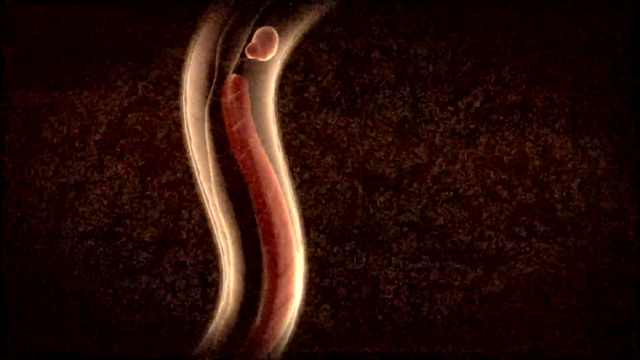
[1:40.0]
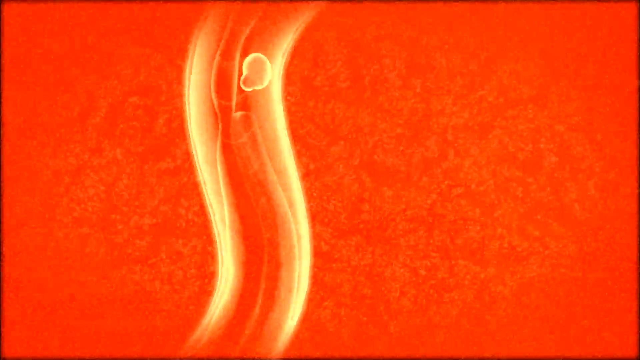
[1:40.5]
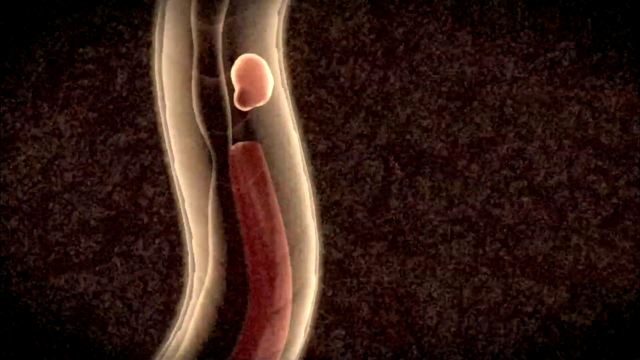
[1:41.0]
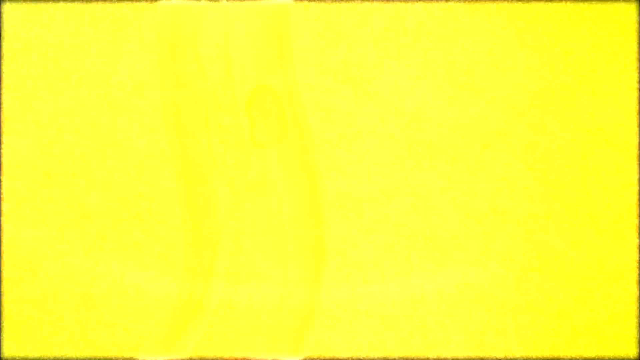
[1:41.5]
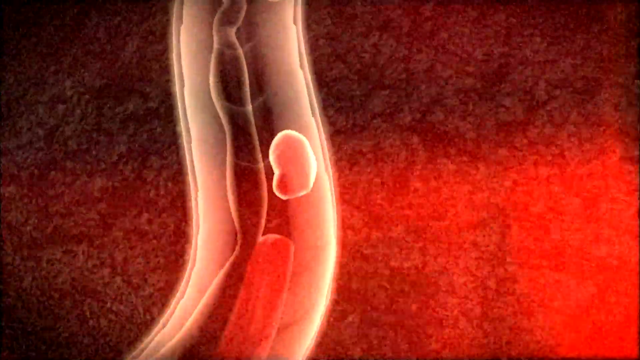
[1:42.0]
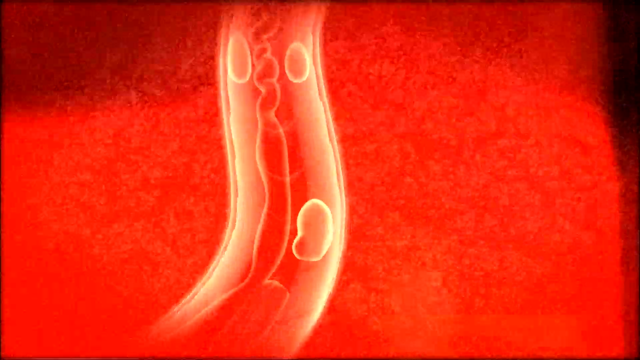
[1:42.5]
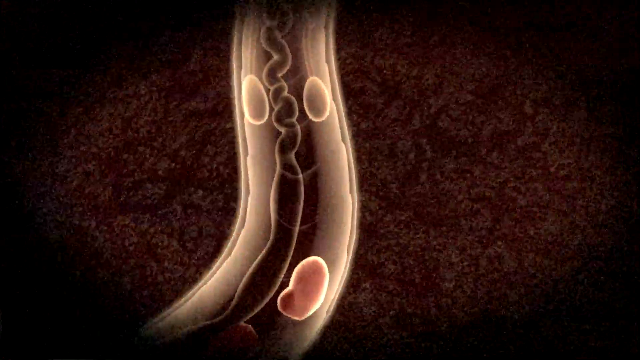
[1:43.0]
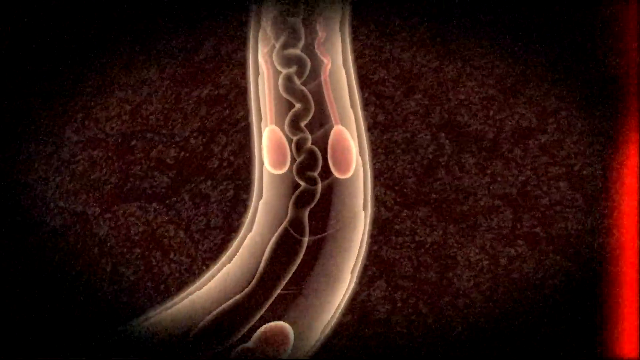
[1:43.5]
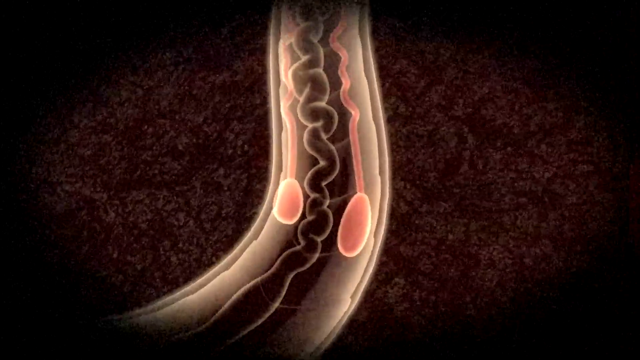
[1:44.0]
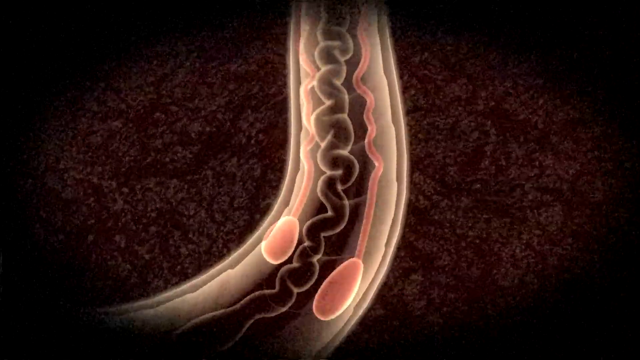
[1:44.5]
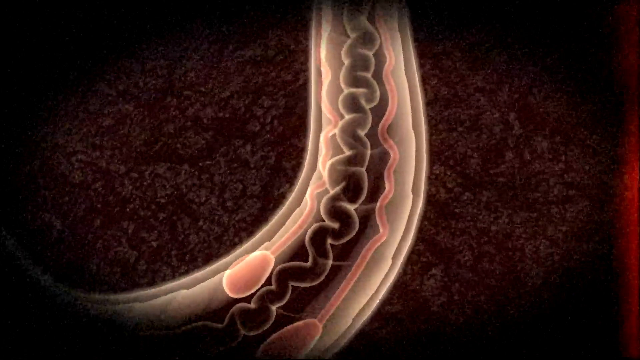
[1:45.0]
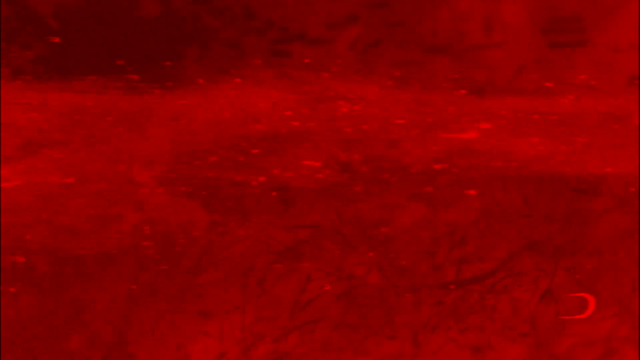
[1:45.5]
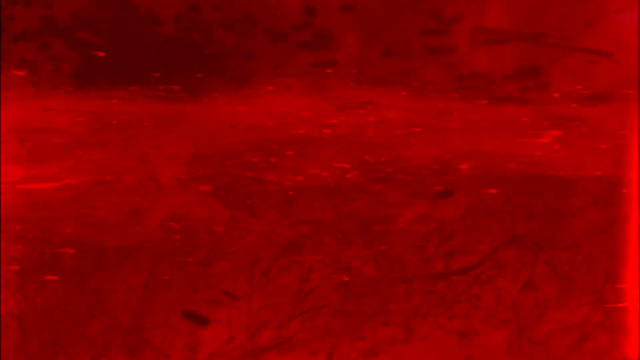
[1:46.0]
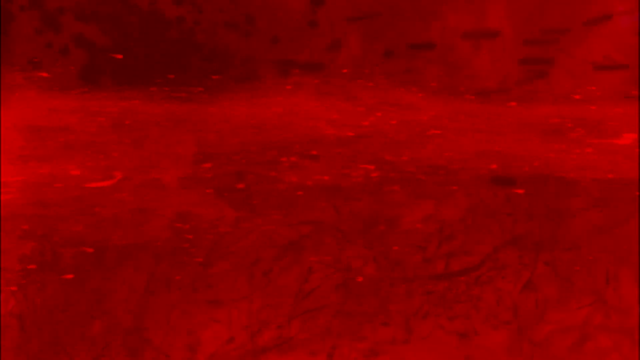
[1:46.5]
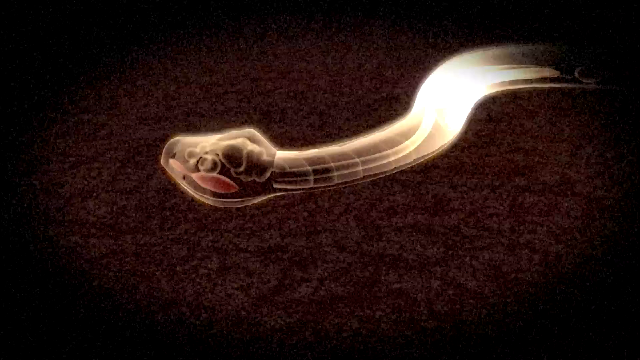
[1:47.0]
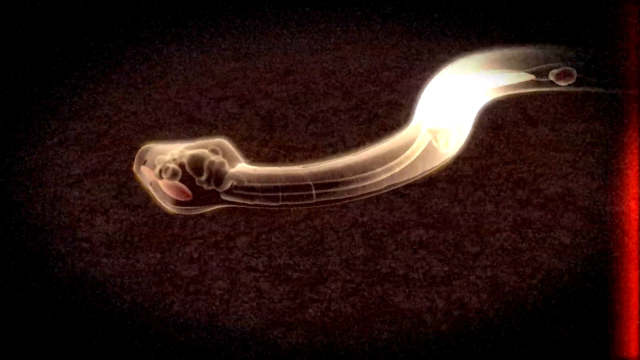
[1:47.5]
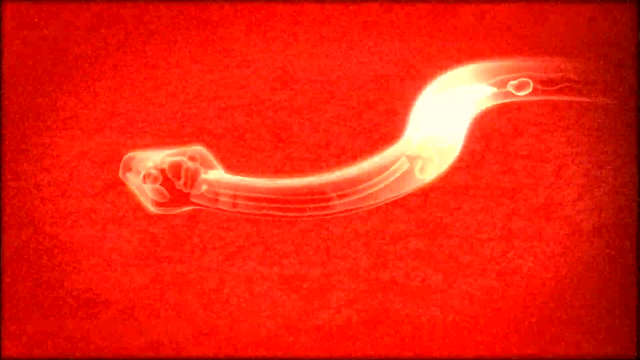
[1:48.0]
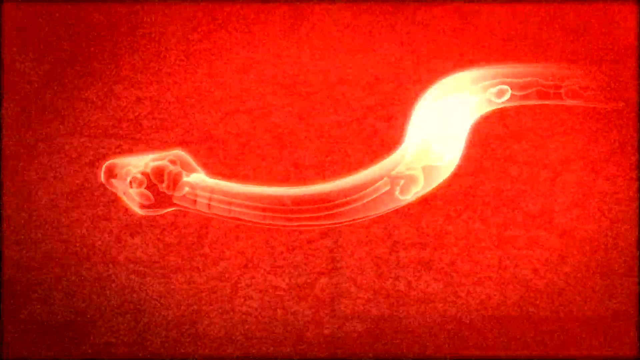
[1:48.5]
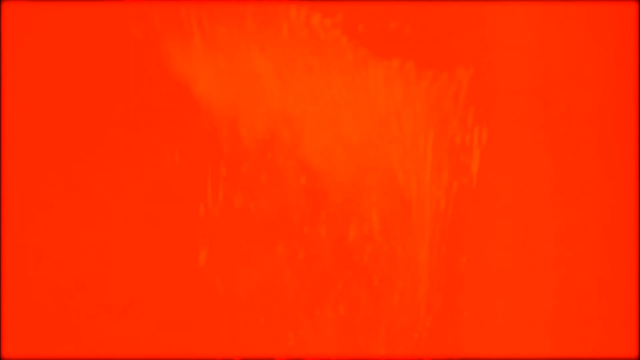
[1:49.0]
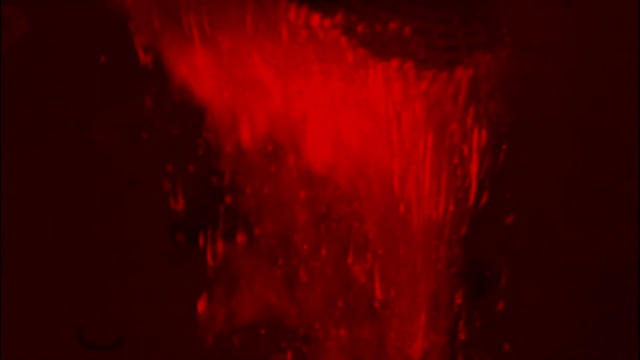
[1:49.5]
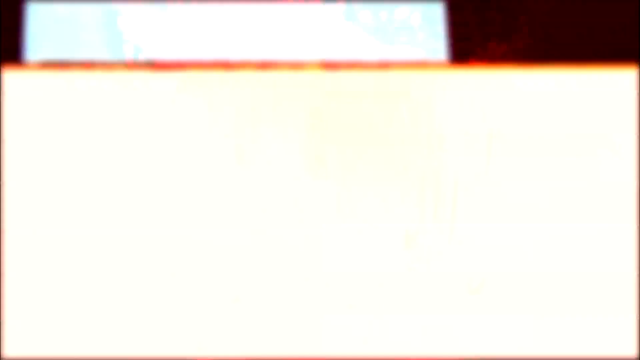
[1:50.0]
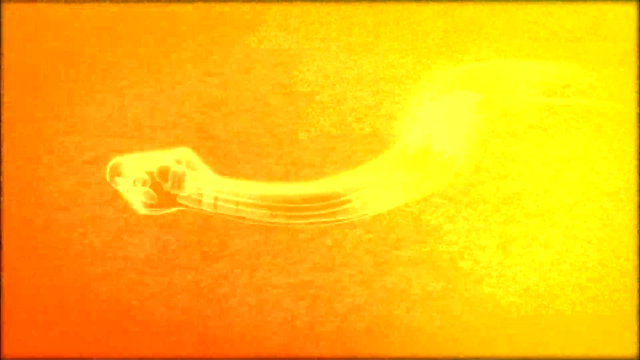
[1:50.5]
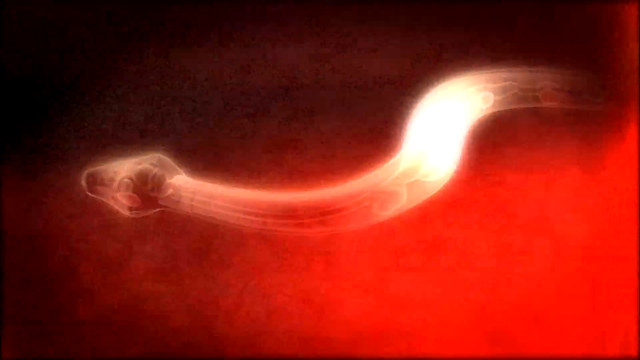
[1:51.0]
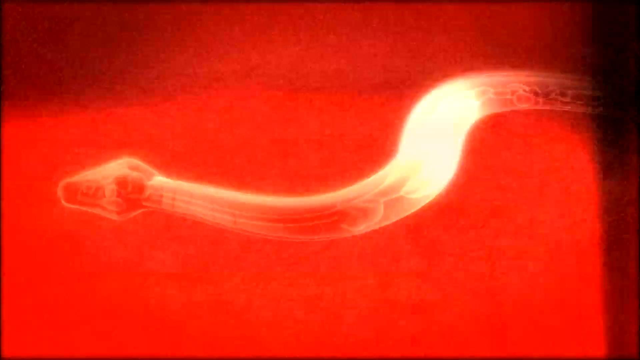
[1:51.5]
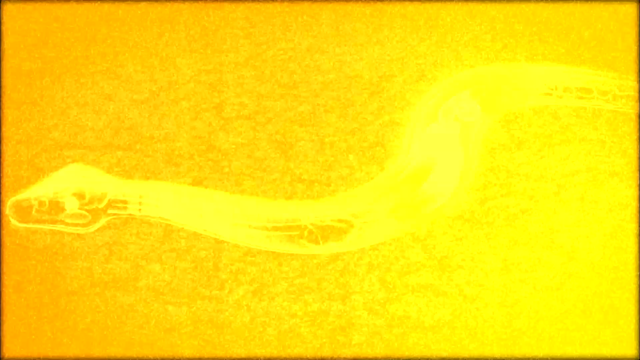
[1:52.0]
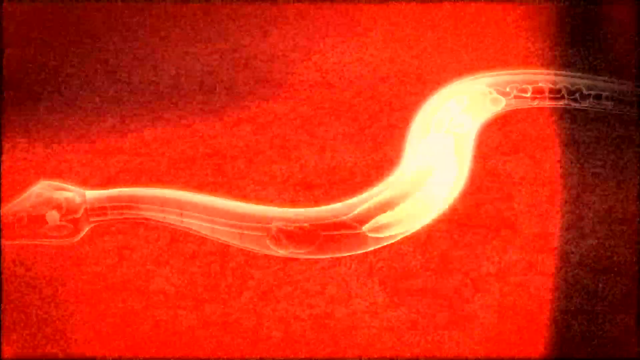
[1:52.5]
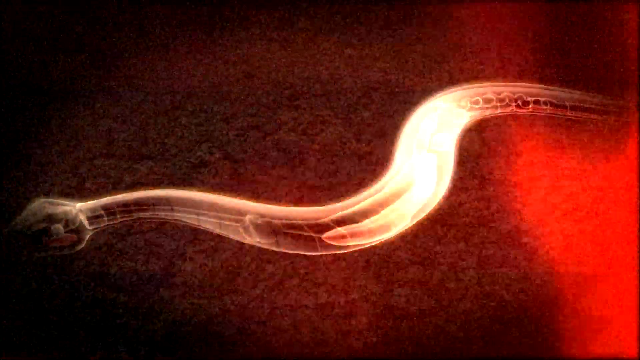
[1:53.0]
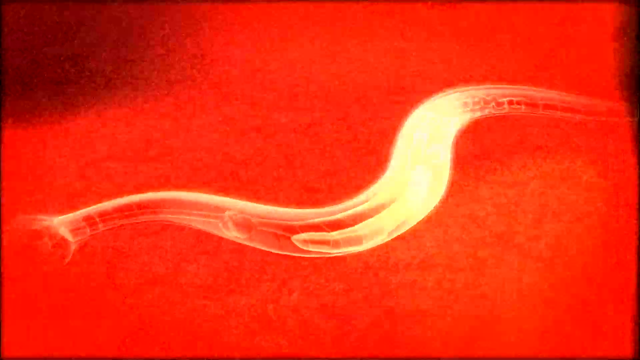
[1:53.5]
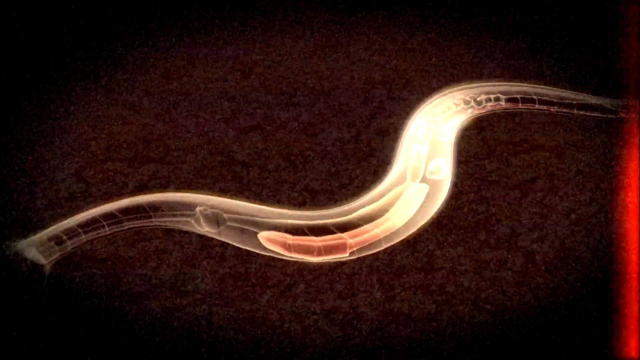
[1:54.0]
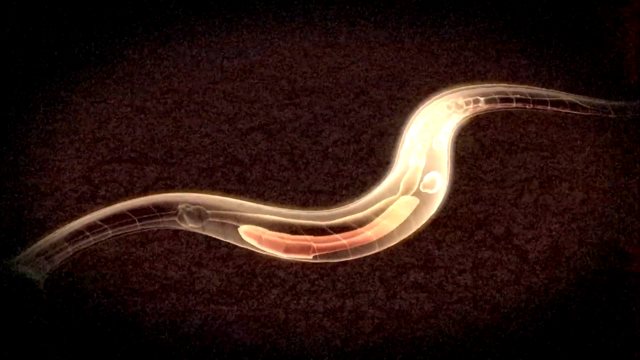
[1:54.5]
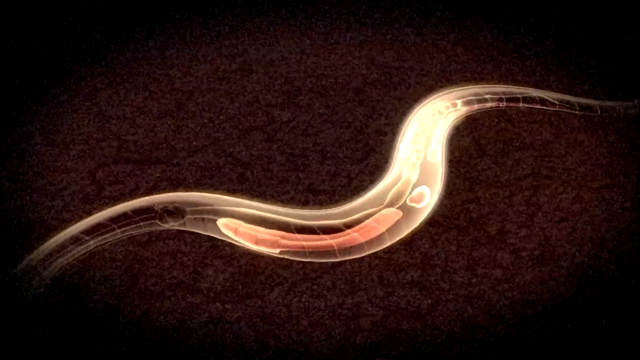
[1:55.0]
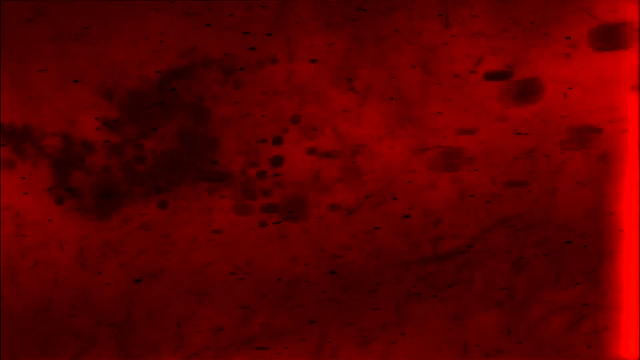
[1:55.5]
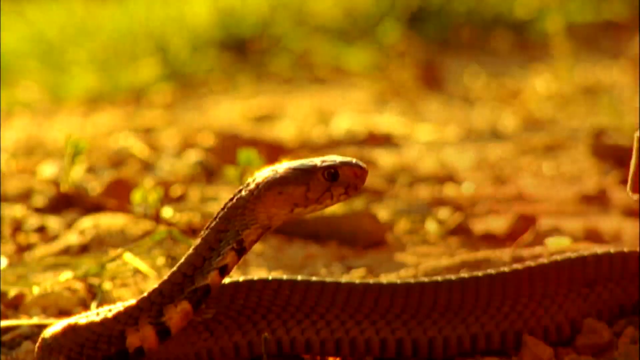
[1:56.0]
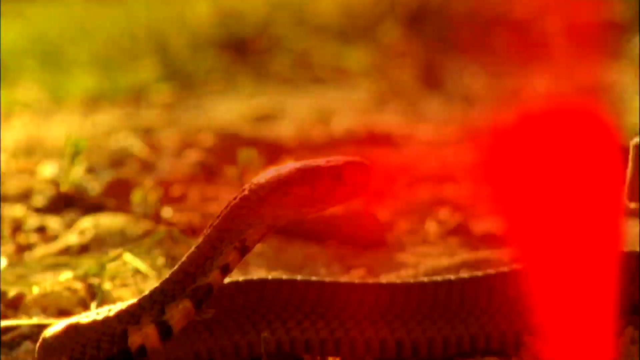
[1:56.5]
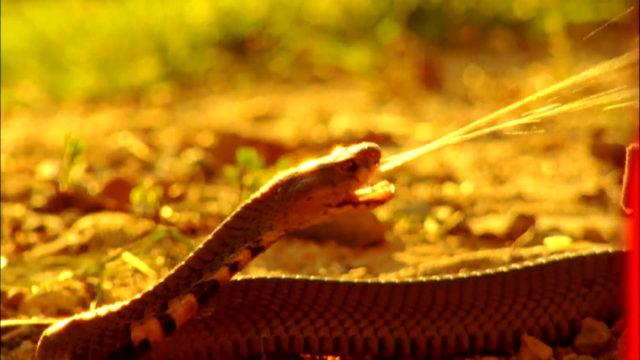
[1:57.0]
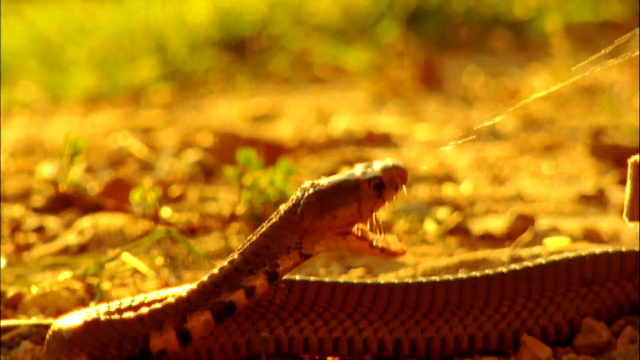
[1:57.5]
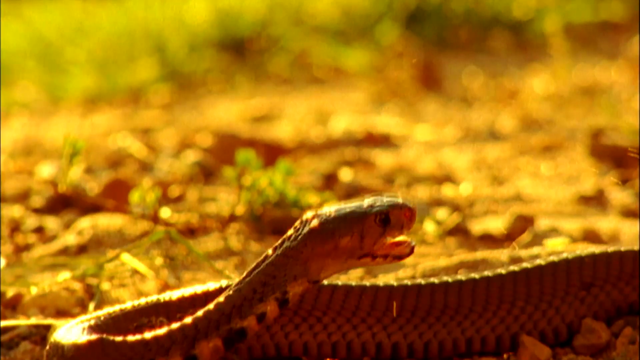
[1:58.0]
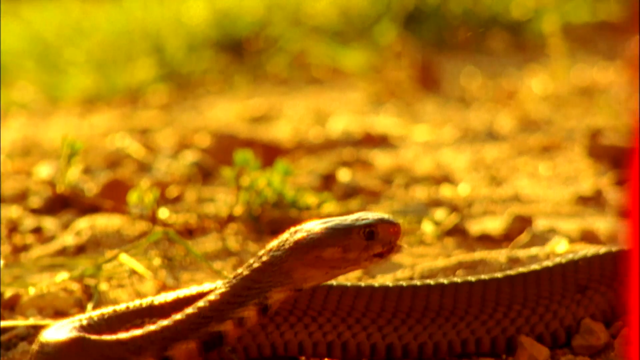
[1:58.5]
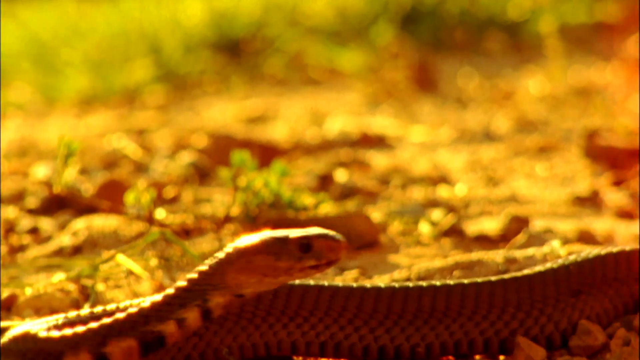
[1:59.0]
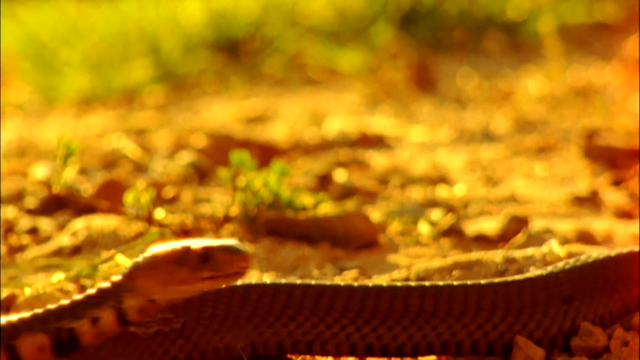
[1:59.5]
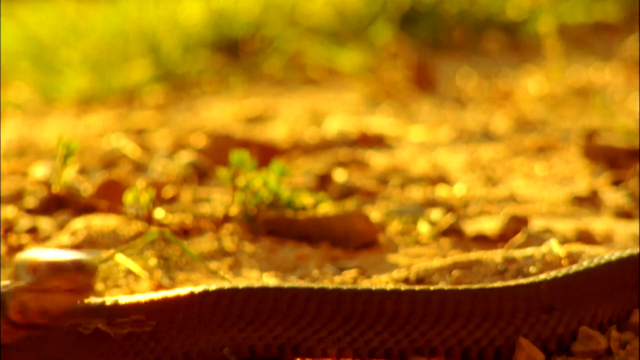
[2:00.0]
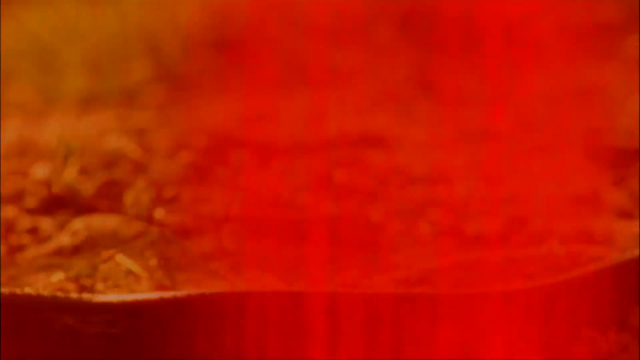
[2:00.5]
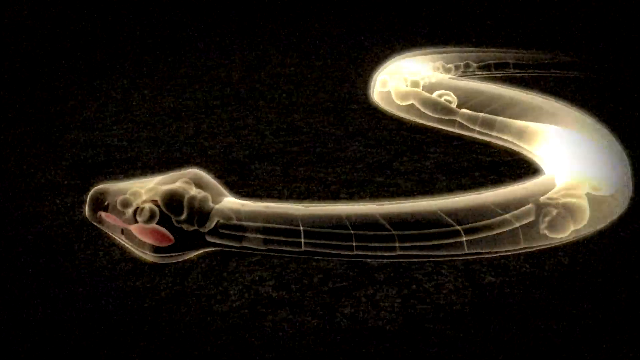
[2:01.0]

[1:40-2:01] Animated footage shows what looks like the inside of the snake, with what is possibly food traveling down its body and what look like different parts of the snake. Another animated shot, from the side, shows the snake slithering on the ground with its various internal parts visible, like an x-ray view. The video cuts to actual footage of a snake pointing to the right side of the screen, seen from the side; it opens its mouth and a liquid, likely venom, spews out. It then stops and retreats a bit to the left. The video ends with another x-ray animated shot.